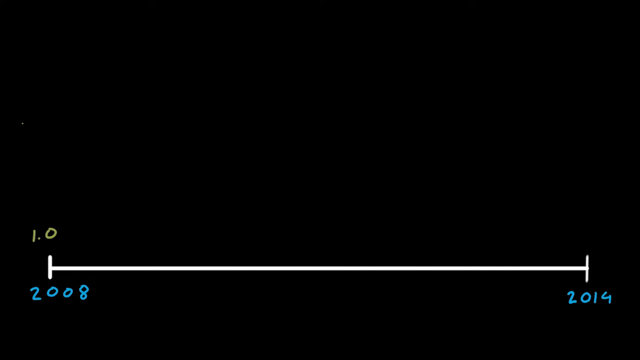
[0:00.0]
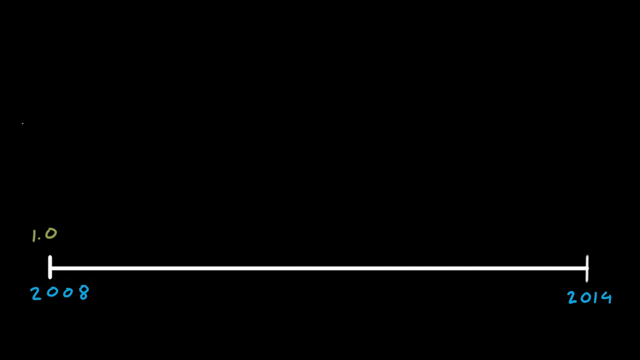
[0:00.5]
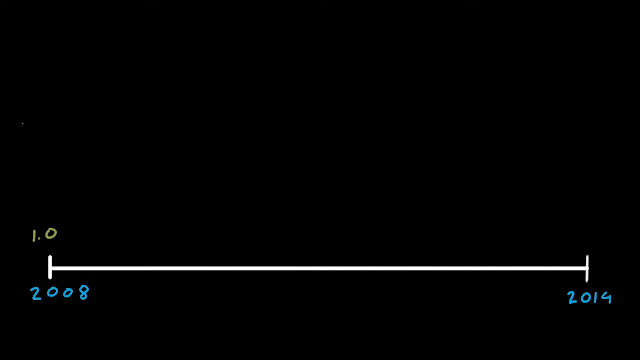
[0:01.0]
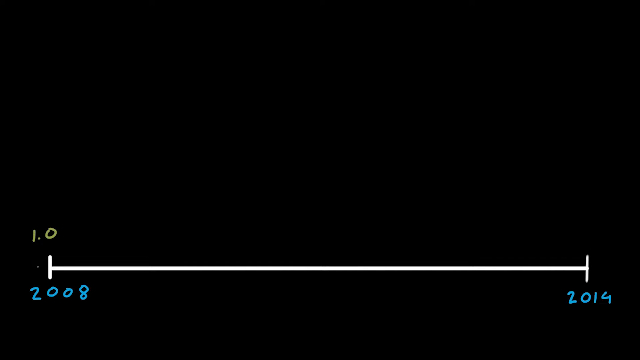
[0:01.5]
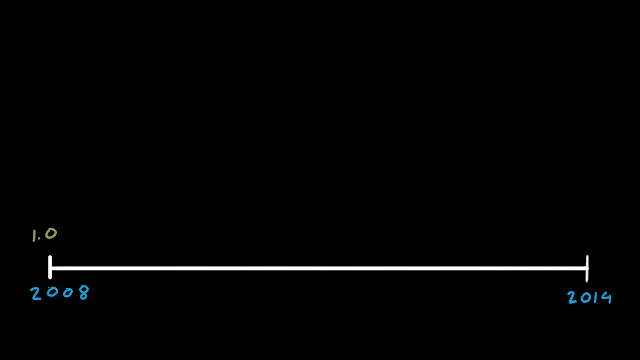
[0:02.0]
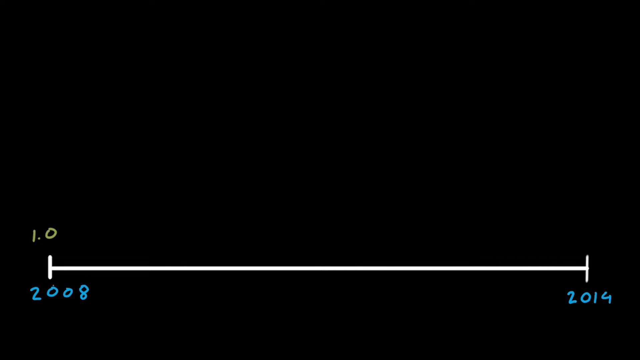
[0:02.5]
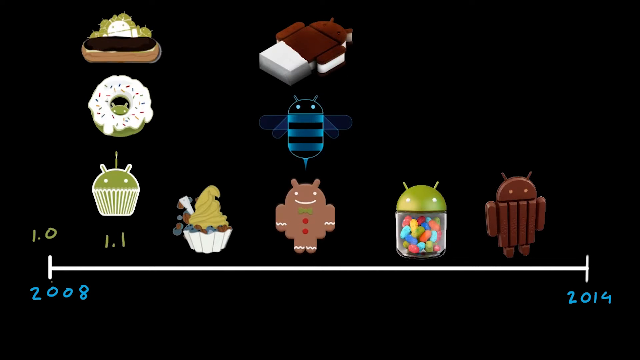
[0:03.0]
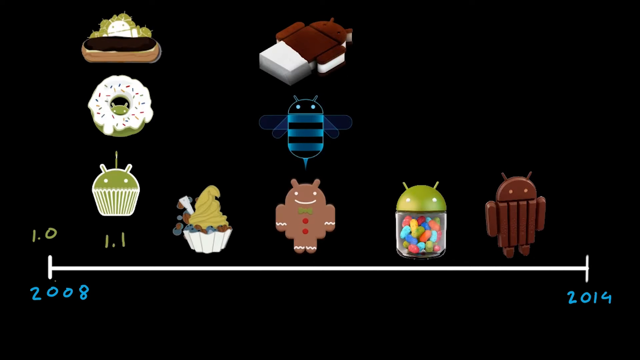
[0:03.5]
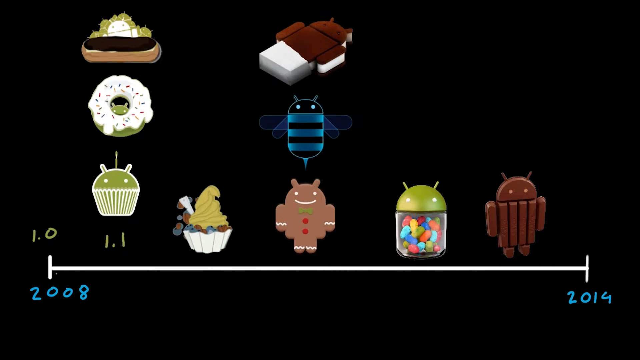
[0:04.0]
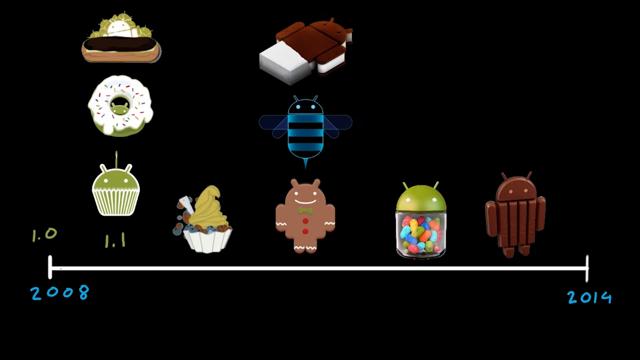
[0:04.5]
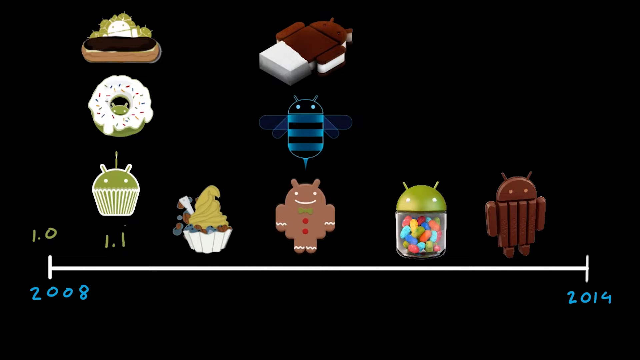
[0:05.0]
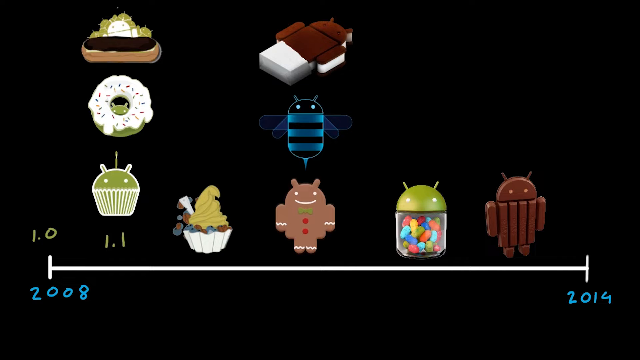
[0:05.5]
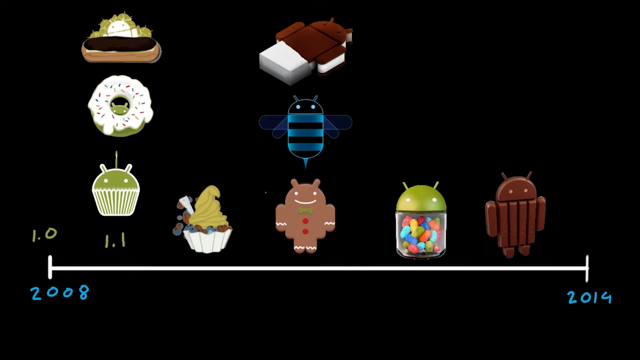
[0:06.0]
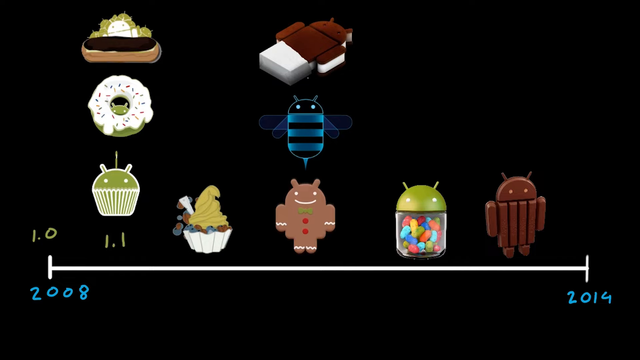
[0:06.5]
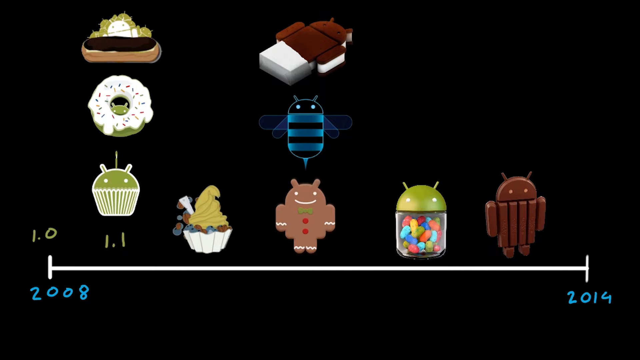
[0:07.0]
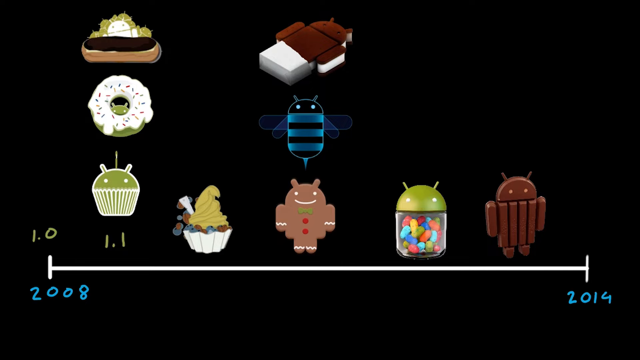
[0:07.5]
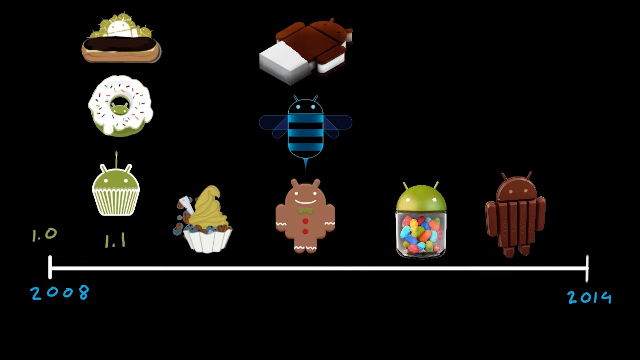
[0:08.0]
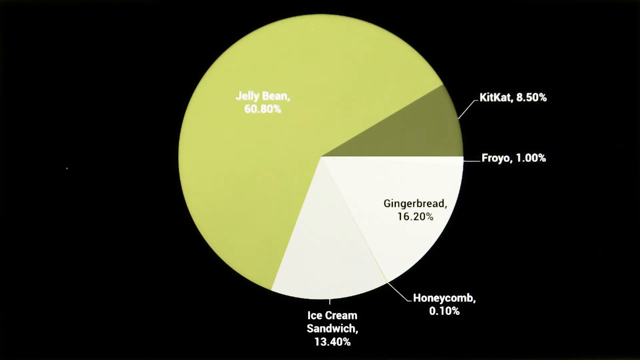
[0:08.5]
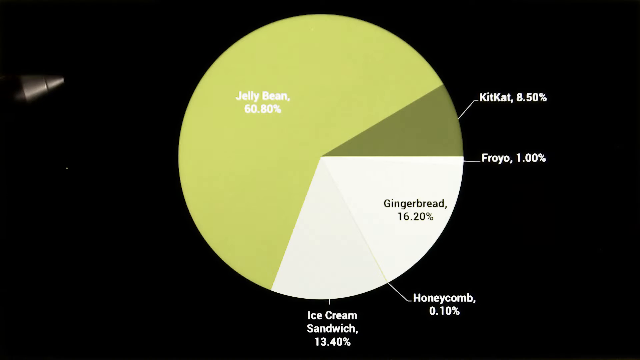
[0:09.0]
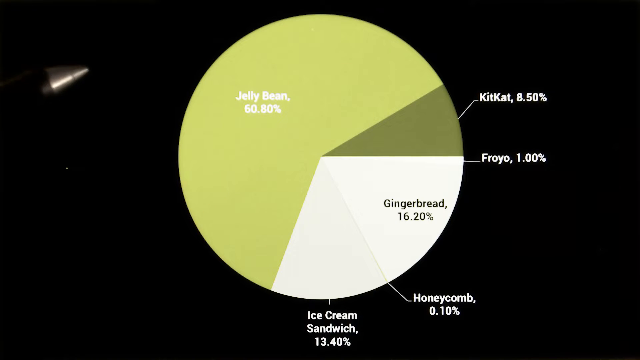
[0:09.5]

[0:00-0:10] On a black screen, a horizontal line runs along the bottom with a vertical line at each end. The left end reads "2008" and the right end reads "2014", and "1.0" is written above the 2008. Slightly to the right of the 1.0 is "1.1". Above that is a graphic of what looks like a green cake in a cake tray with a cake paper with lines up it; the cake emerges from the top and looks like an alien with two little antennae pointing out on either side and what may be a birthday candle pointing out the top. Above that is some sort of donut-type thing, which also has the little alien feature emerging in the middle of its ring. Above that is an eclair shown horizontally, with the choux pastry and a dark chocolate covering on top. Above that an alien robotic-type thing appears next in line. There is no 1.2, but there is an elaborate cupcake with high icing, then an alien gingerbread man shape, and above that some sort of bee with a prominent sting on a sort of tablet-shaped blue and black striped shape, again with an alien-type feature at the top. This continues. A circular chart, a kind of pie chart, then appears: 60.8 percent of it, most of the top half and the left-hand side, is filled, with the text "jellybean 60.80 percent". The other part of the top half, on the right-hand side, is a darker green, labelled "kit kat 8.5 percent", with that text outside the chart on the black background. At the bottom, leading on from the jellybean portion, is a light gray section, with the text "ice cream sandwich" outside the chart.